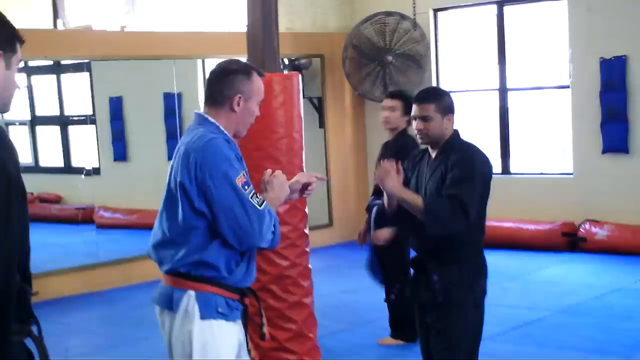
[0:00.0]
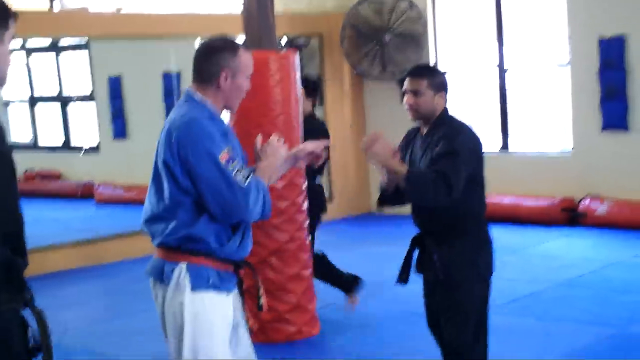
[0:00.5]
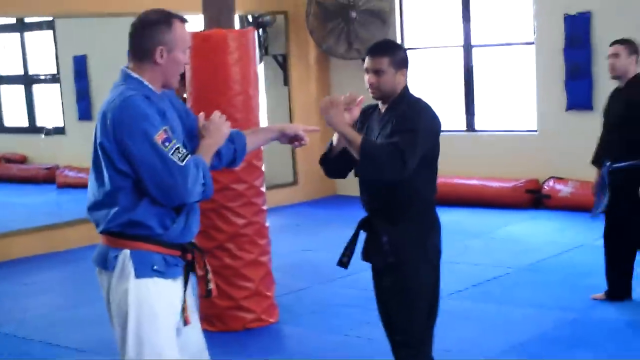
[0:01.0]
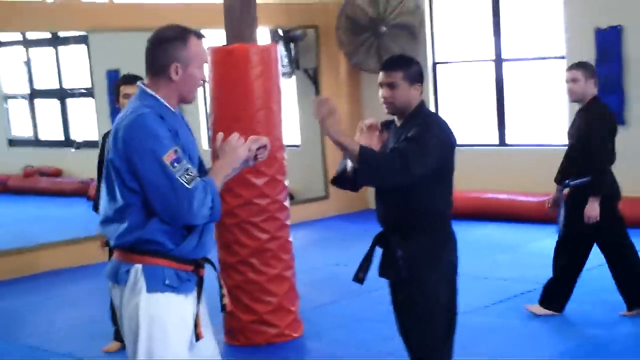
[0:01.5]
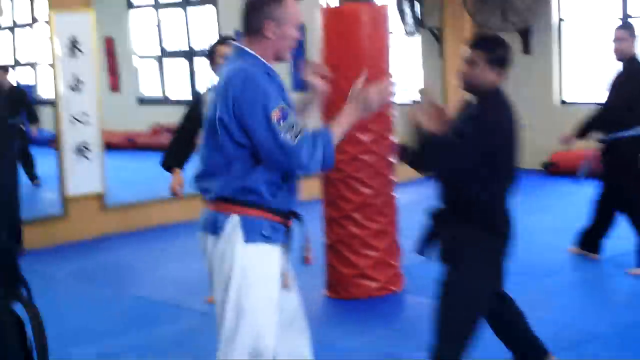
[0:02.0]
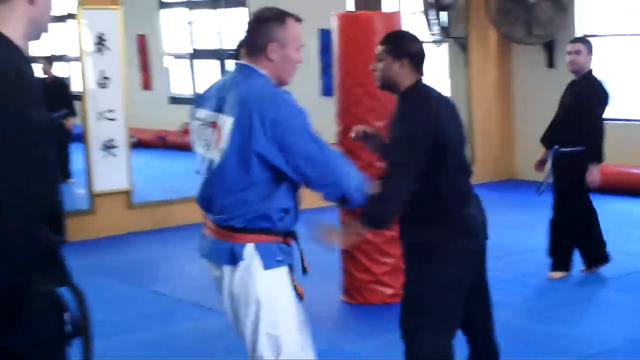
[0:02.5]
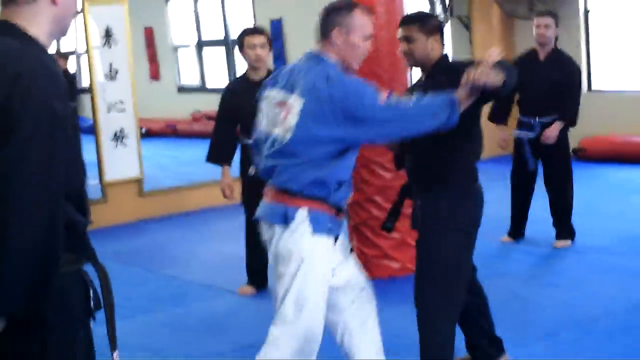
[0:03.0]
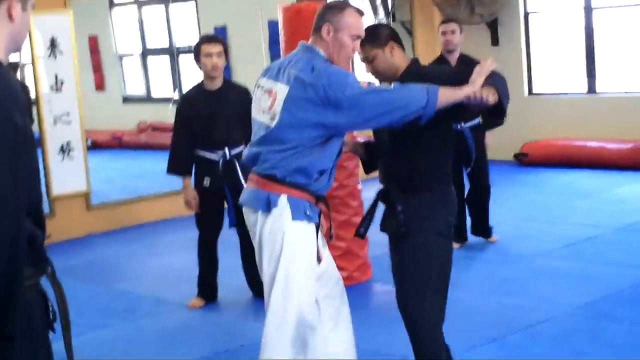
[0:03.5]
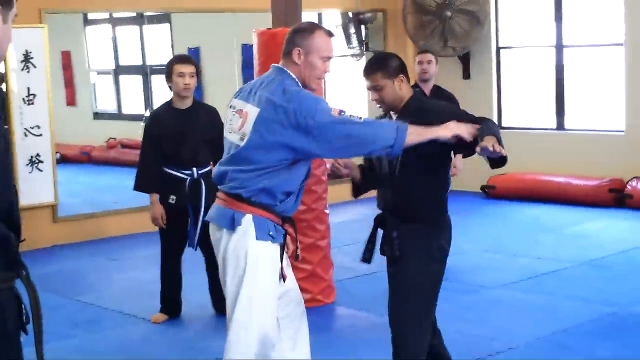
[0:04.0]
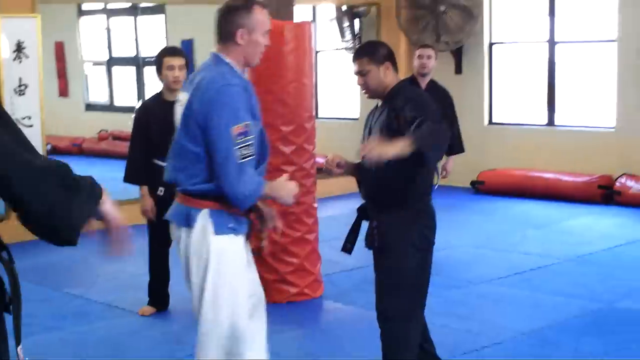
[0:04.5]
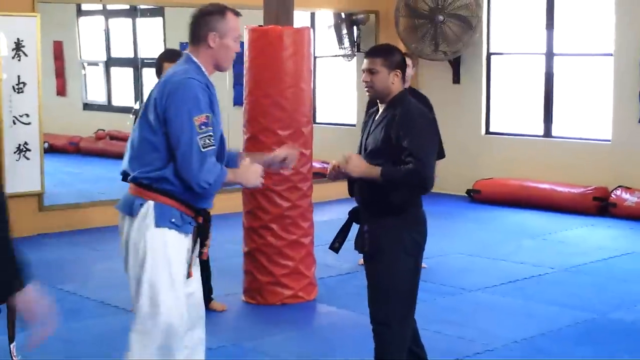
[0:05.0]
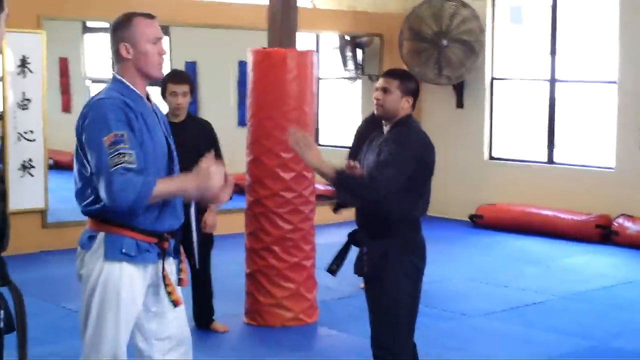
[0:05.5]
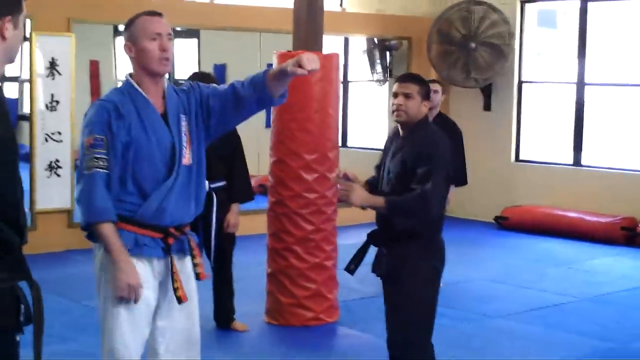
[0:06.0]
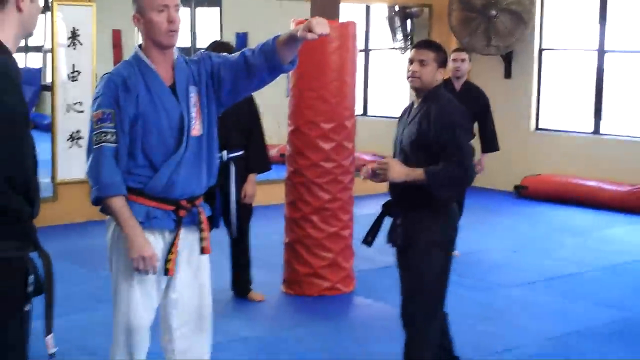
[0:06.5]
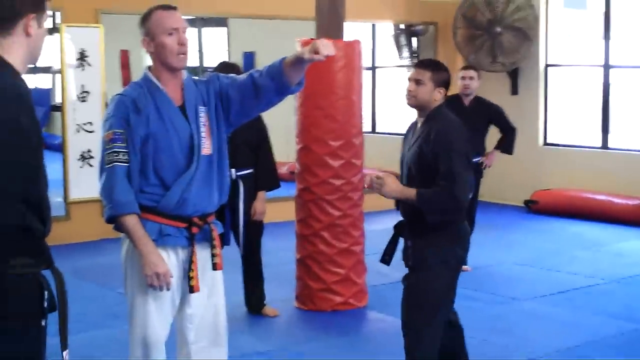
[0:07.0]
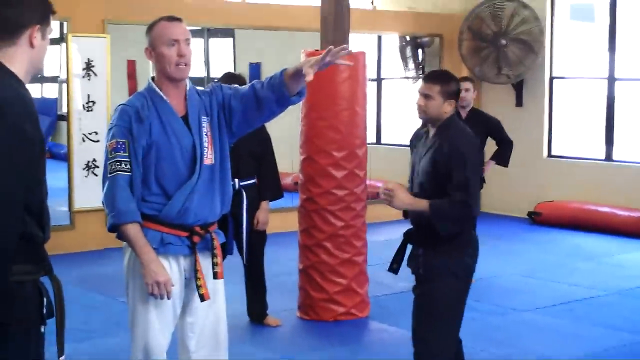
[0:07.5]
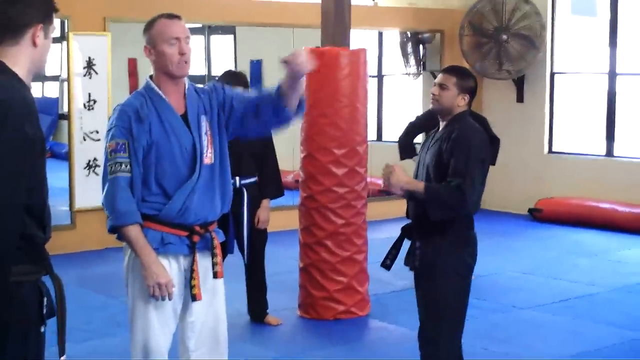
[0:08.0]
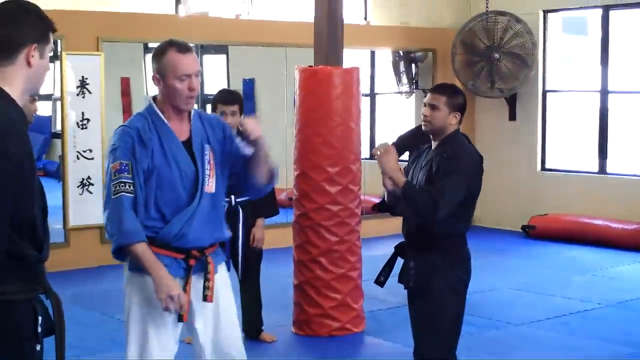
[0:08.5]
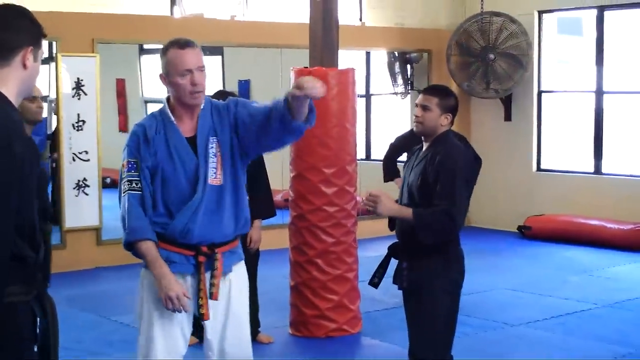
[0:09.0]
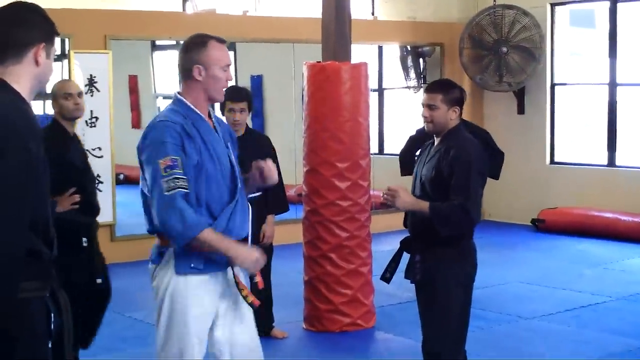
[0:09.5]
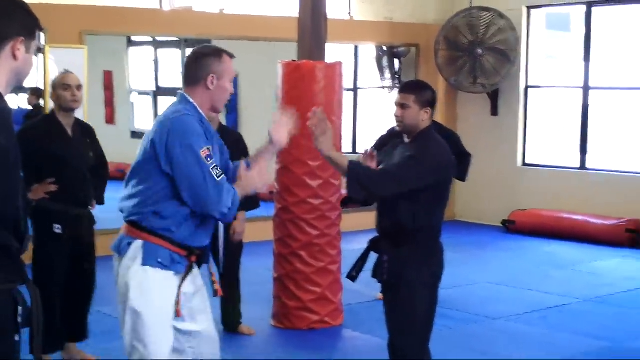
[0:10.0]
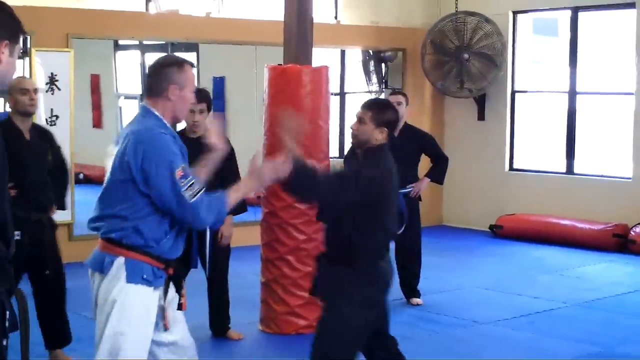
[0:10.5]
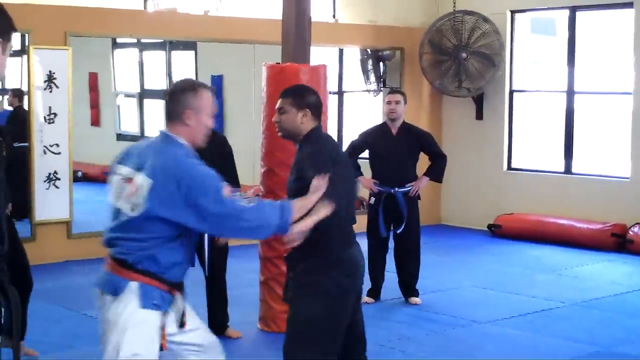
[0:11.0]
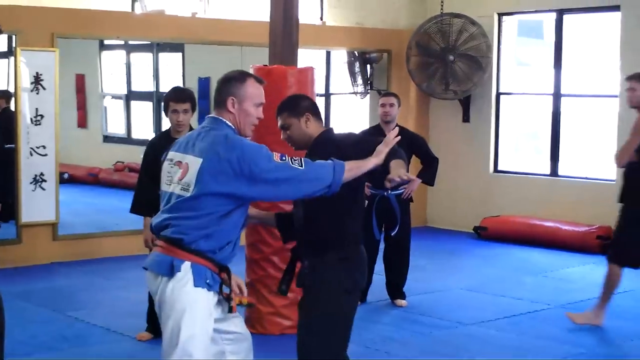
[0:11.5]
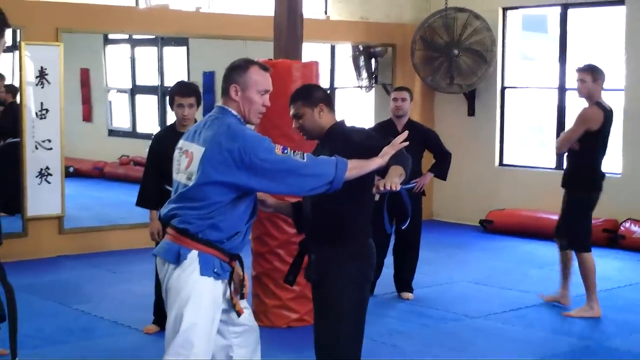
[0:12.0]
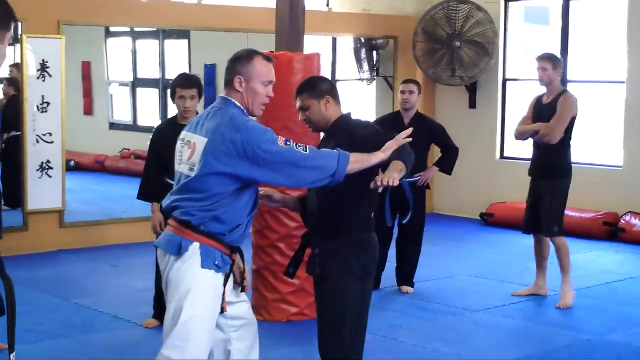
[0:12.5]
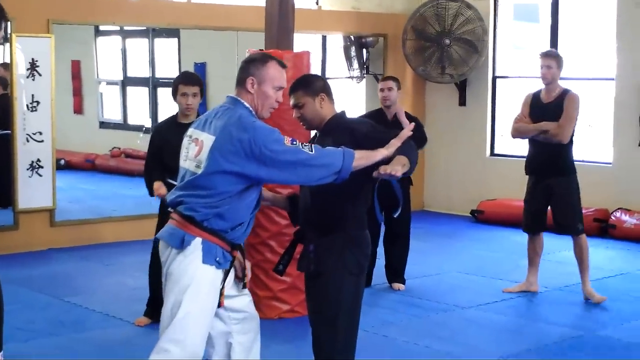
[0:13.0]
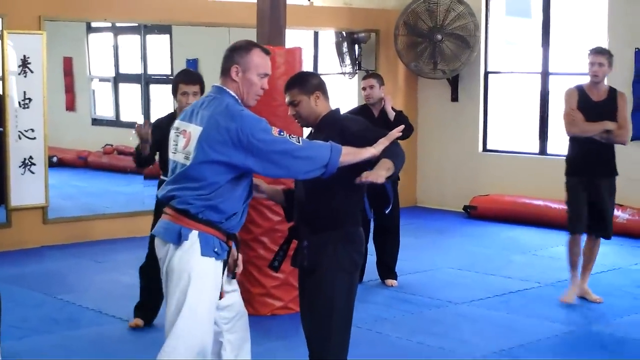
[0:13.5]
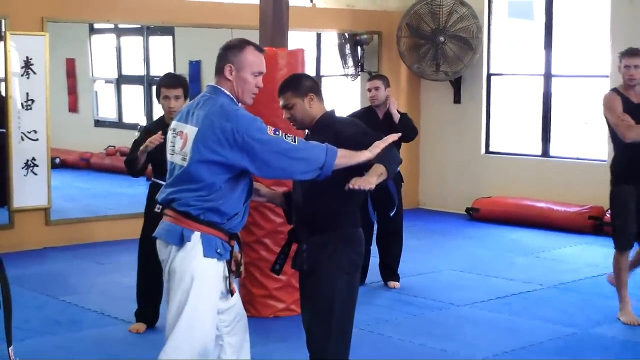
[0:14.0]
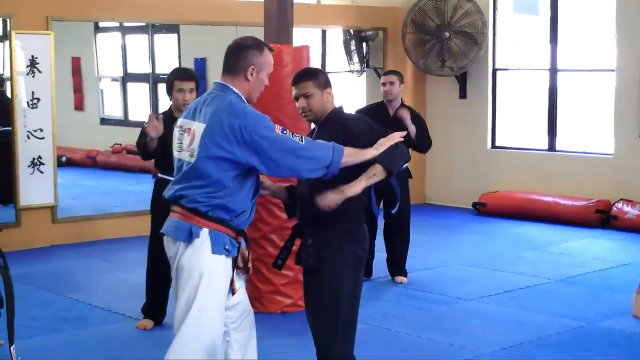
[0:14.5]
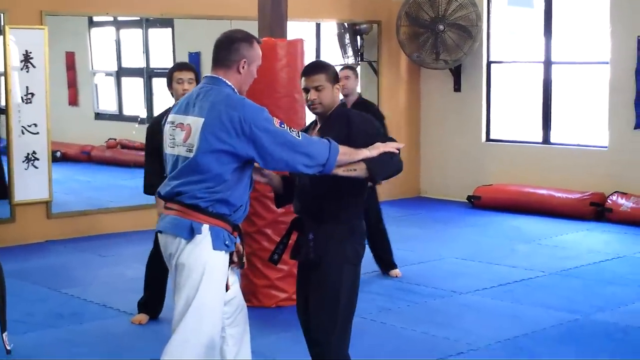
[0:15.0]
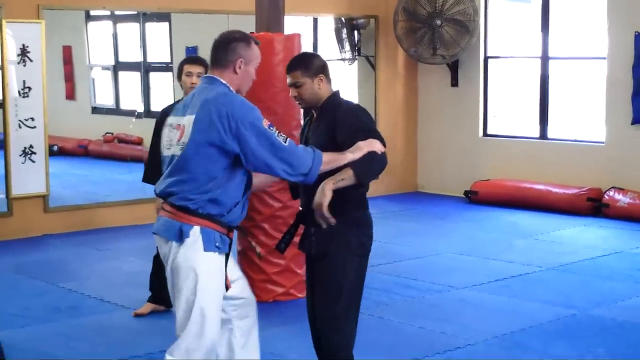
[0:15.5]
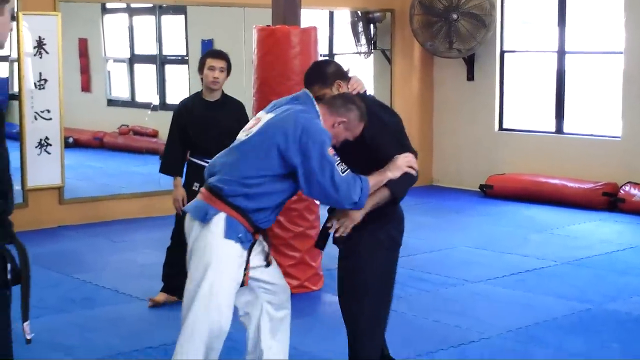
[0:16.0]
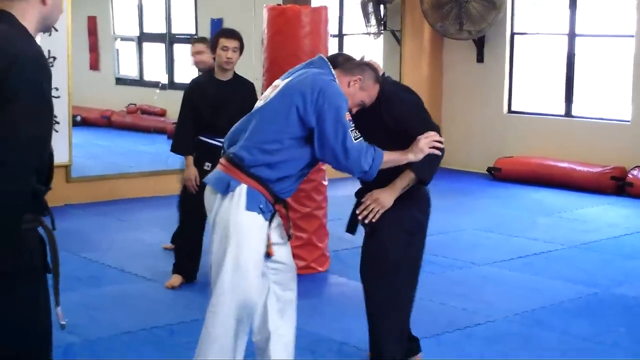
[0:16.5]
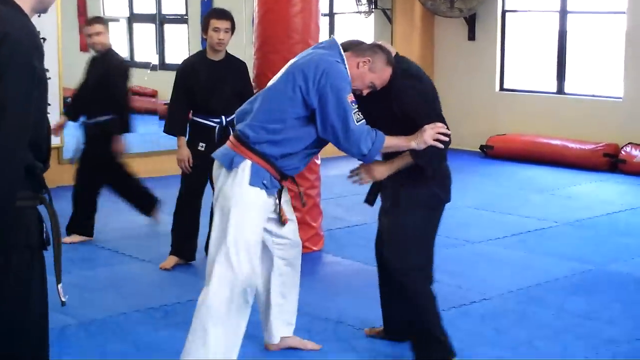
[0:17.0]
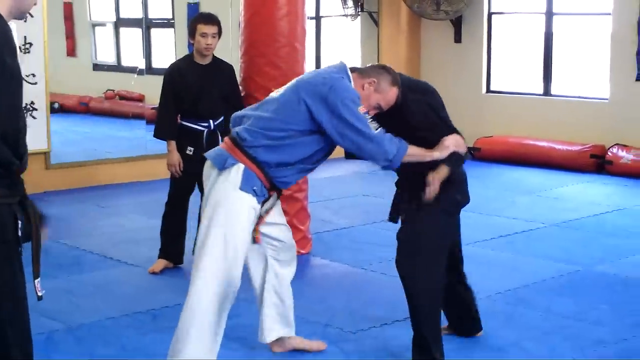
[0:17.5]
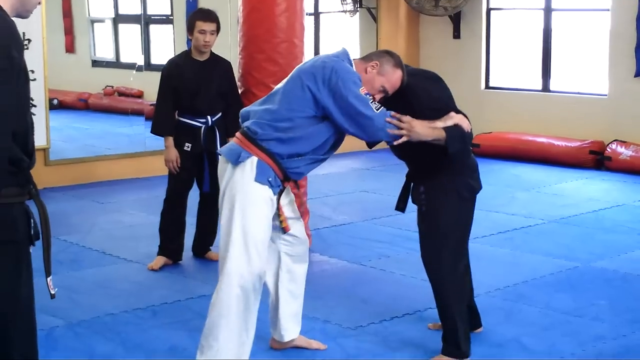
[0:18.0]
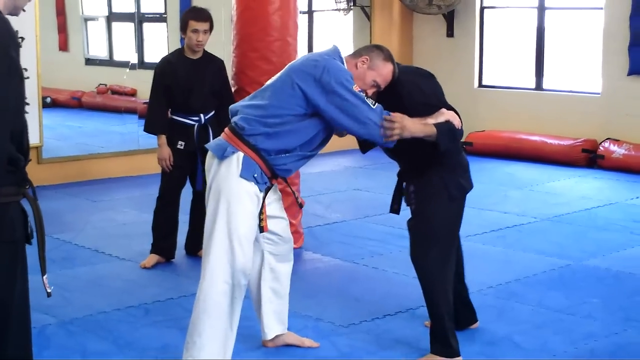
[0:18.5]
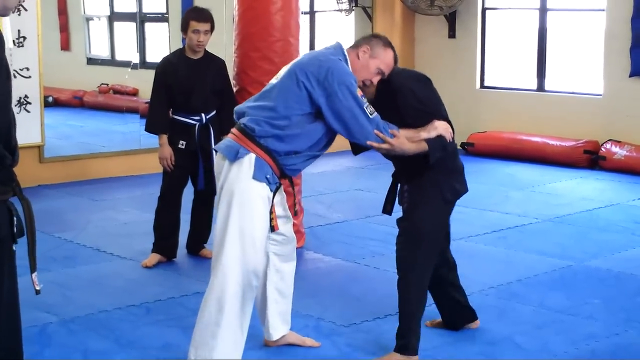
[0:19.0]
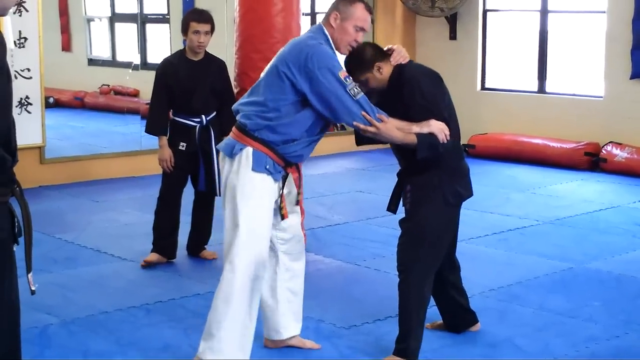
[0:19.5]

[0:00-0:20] A person is learning martial arts under an instructor, who wears a lighter blue jacket with ties around his waist. He demonstrates a move with a student dressed in black while other students in the gym watch. The instructor explains to the students how to make the move, and more and more of them gather around to watch the demonstration. One of them mimics the instructor's movements to learn how to do it. The gym has mirrors, a large fan, and a window. Framed Asian writing running downward hangs between two of the mirrors. The instructor appears to be American, while the students appear to be of a different nationality. Red bumpers are along the walls, and the floor is cushioned with blue cushions.